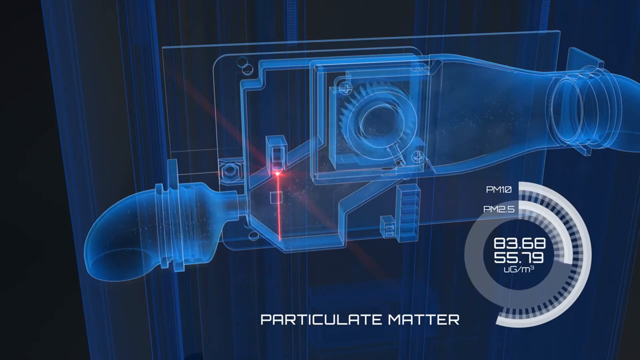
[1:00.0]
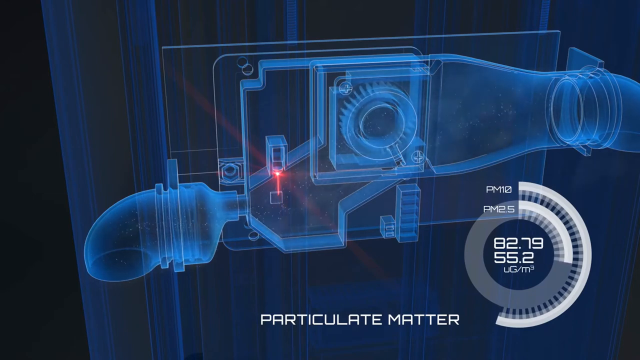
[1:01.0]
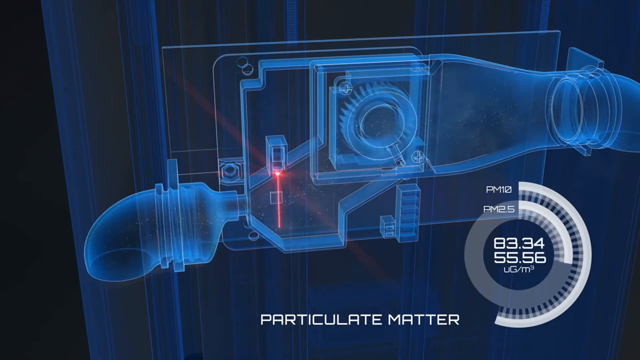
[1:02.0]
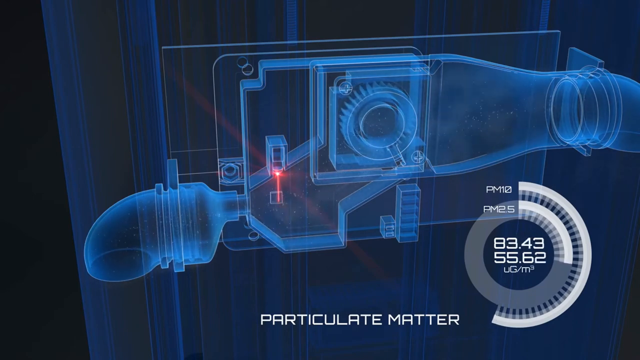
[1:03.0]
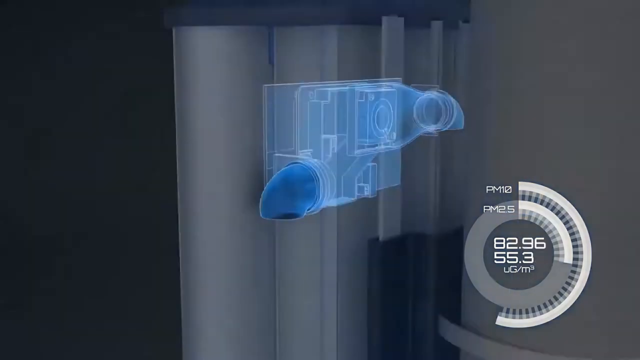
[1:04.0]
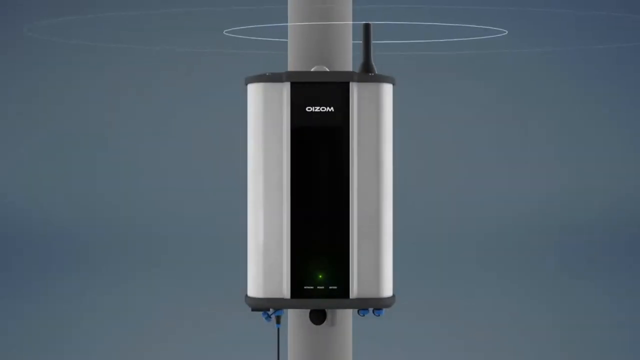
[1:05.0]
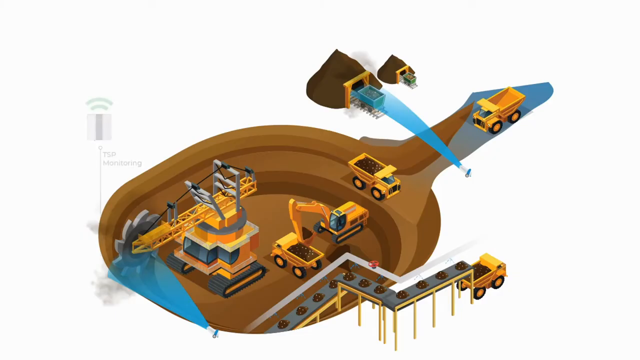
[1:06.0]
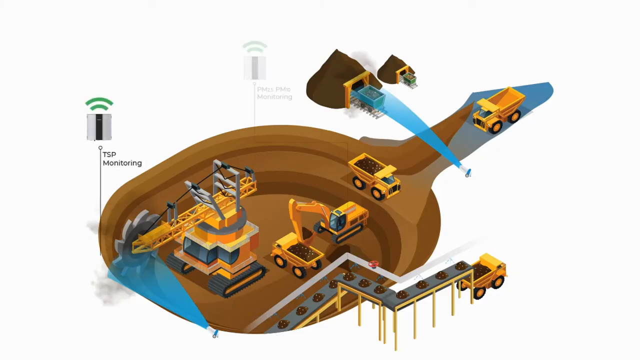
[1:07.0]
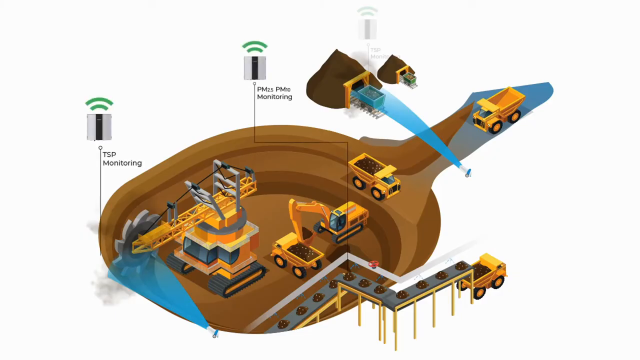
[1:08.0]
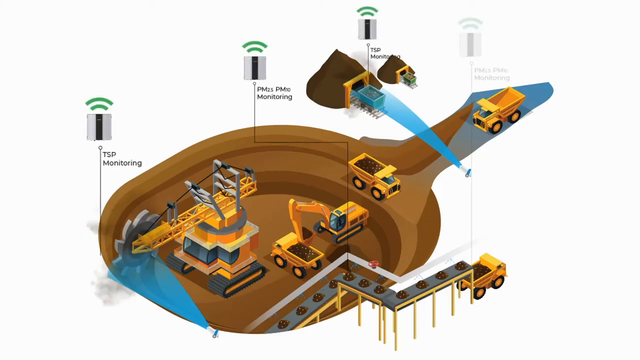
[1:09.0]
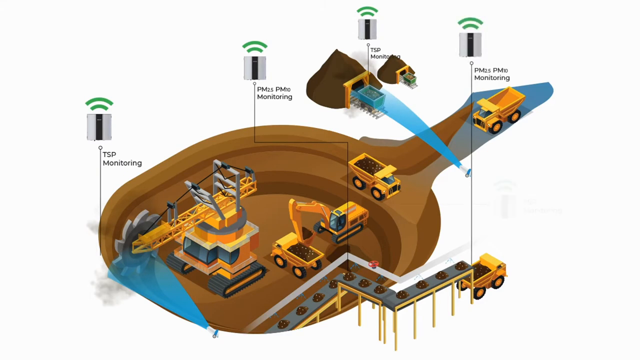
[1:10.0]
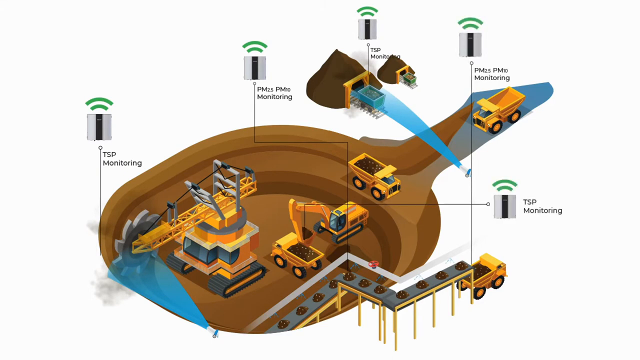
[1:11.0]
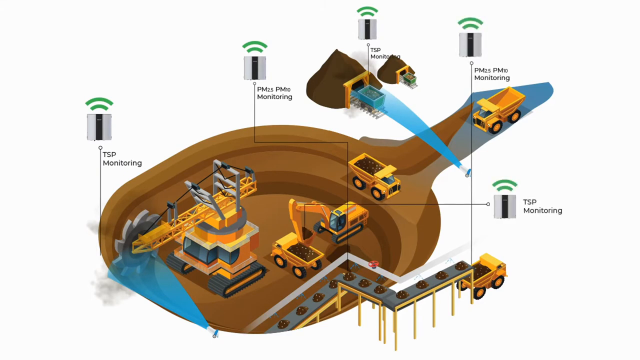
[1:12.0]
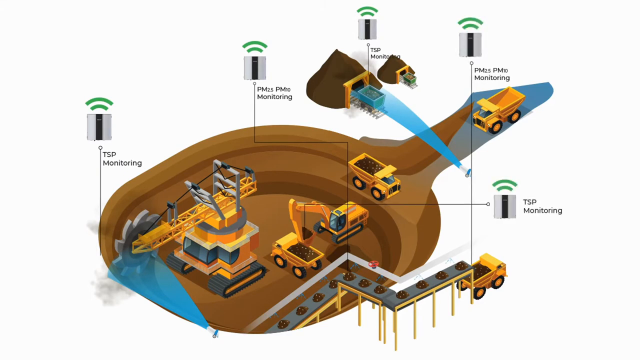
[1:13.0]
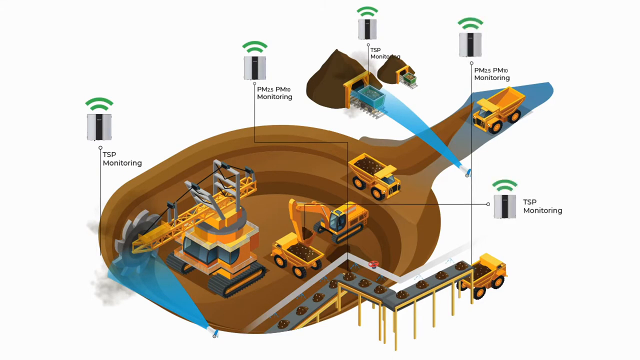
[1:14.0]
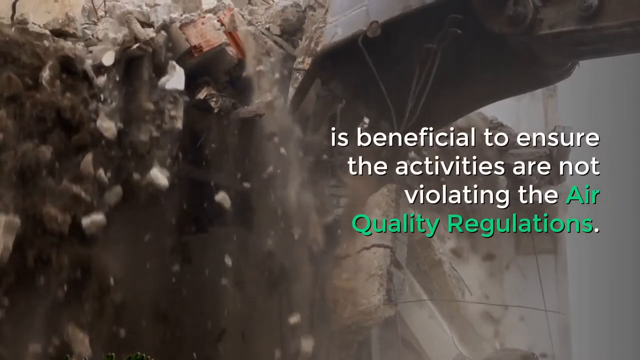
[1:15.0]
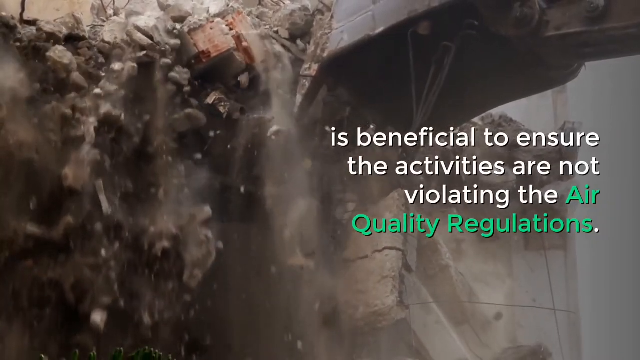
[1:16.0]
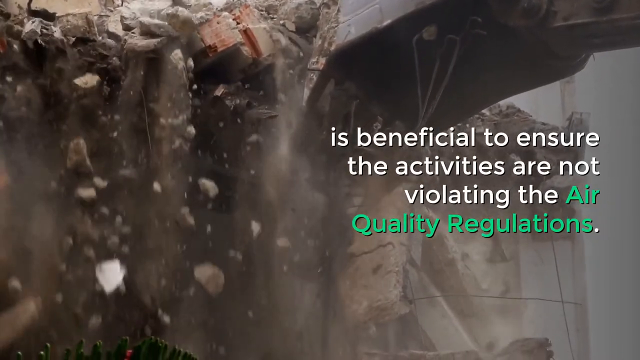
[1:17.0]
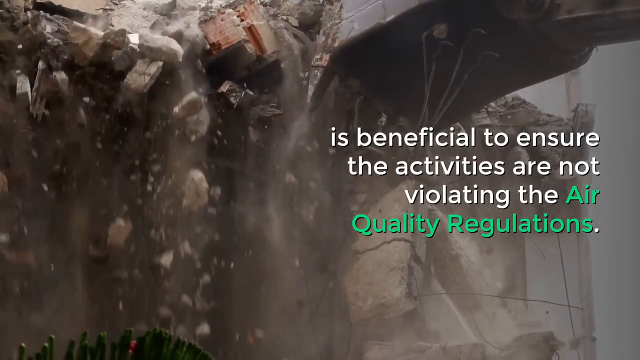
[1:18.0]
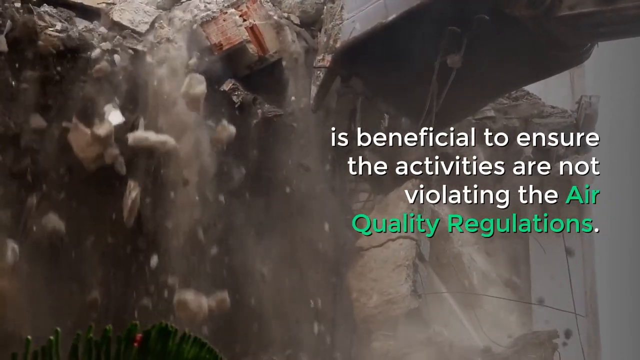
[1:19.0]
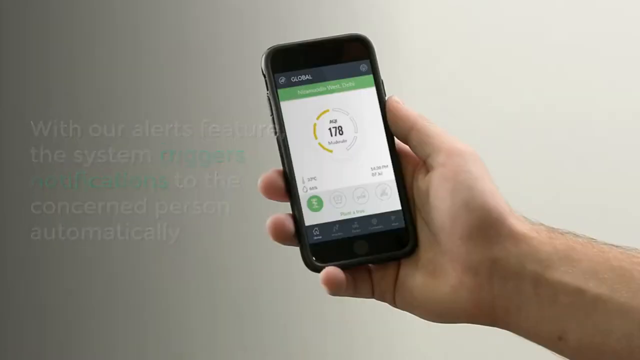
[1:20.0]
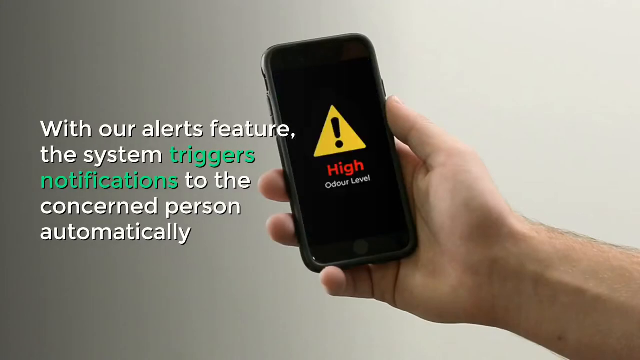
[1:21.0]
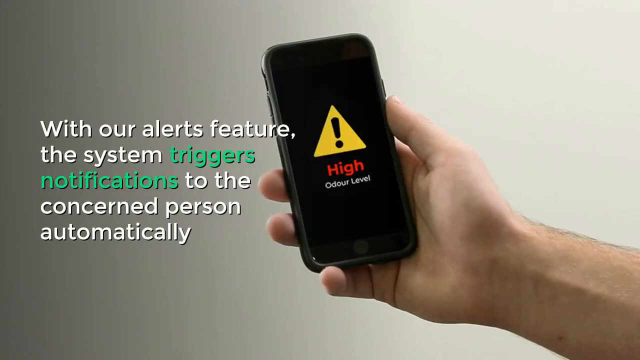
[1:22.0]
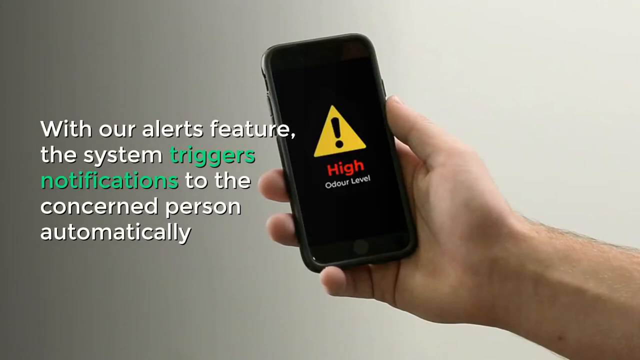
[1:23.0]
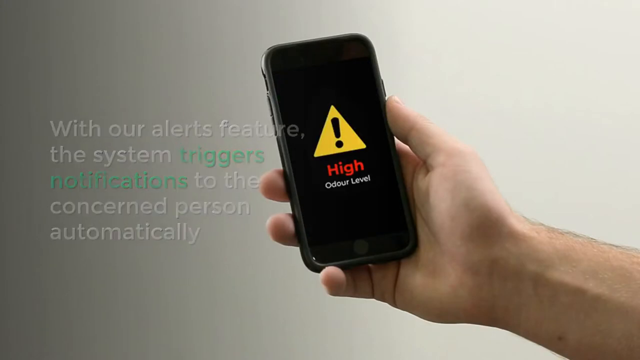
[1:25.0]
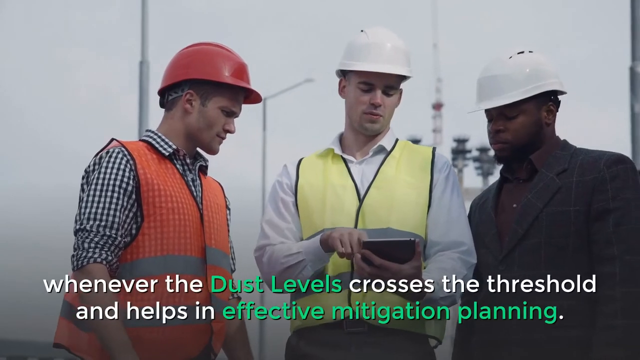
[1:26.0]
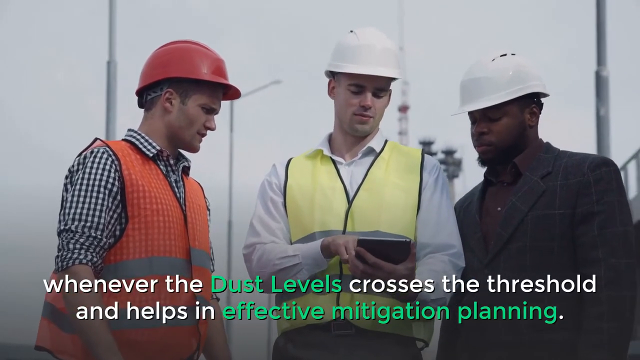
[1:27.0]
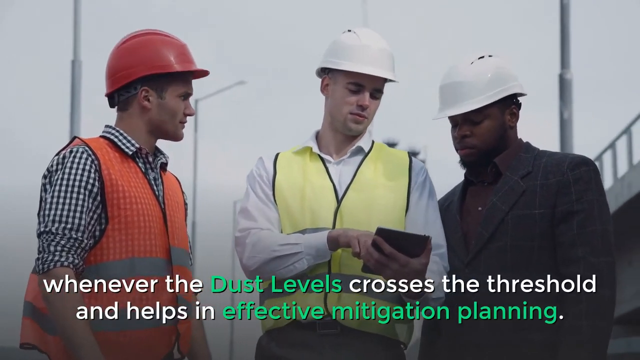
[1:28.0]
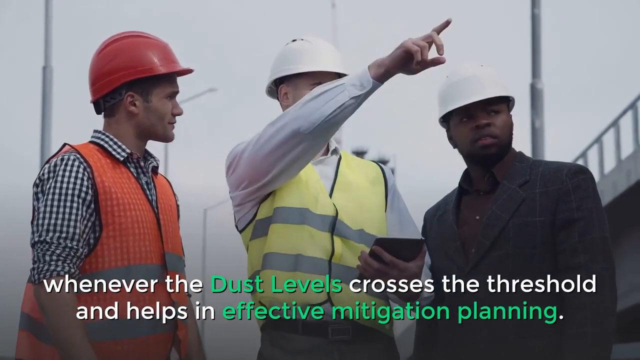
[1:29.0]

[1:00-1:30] An animation shows the mechanism inside a particle monitor, with particles passing through it and a red laser that seems to react to them. In the bottom right-hand corner, a circular sort of meter shows different numbers, as if detecting the amount of particulate moving through the monitor. The view then flies out of the device, showing what looks like a white device with a black strip down the middle, affixed to a pole, with an antenna sending out or receiving a signal. The video cuts to what looks like a drawing of a quarry with several large construction vehicles such as dump trucks and backhoes. Five particulate monitors pop up on it, as if showing the best places to place them. Next, a slow-motion shot shows what looks like a large construction vehicle tearing down possibly a building or just a rock face, with a title reading 'is beneficial to ensure the activities are not violating the air quality regulations'. A hand holds a phone while a title reads 'with our alerts feature, the system triggers notifications to the concerned person automatically', and an alert comes up on the phone. The video then cuts to three men in hard hats, most likely on a construction site, all talking, with a title over the video reading 'whenever the dust levels crosses the threshold and helps in effective mitigation planning'.